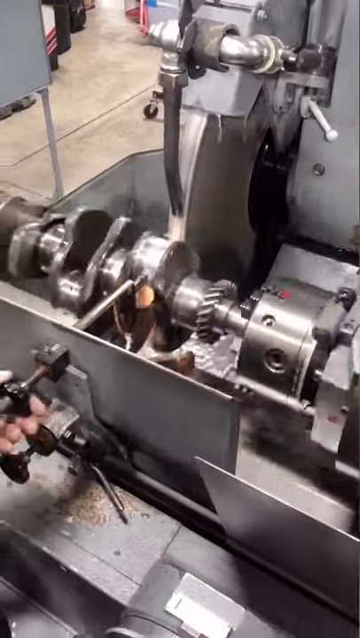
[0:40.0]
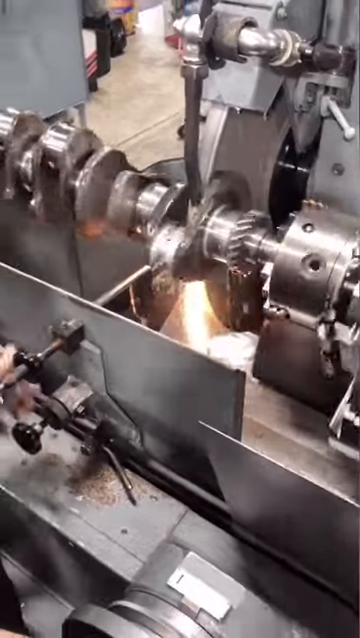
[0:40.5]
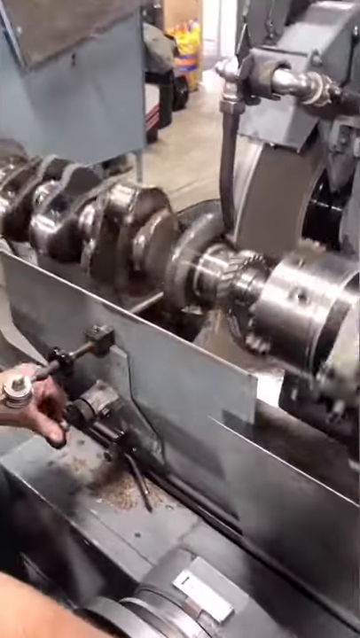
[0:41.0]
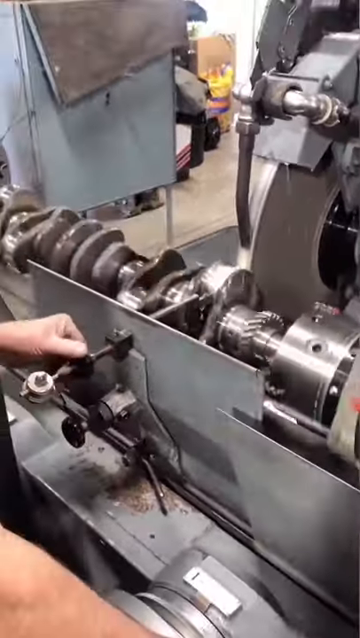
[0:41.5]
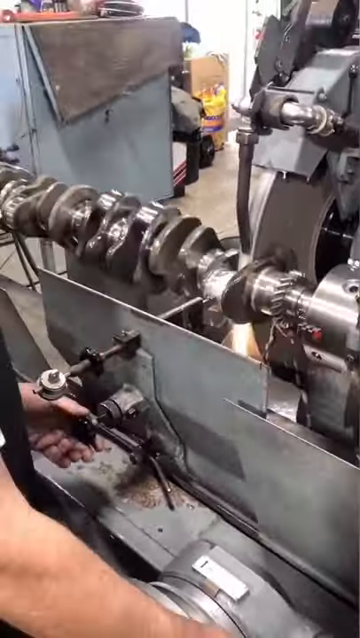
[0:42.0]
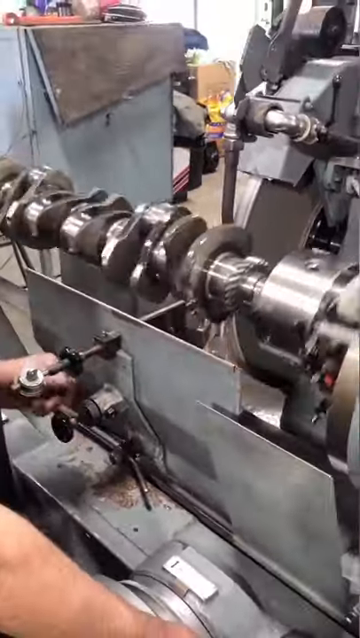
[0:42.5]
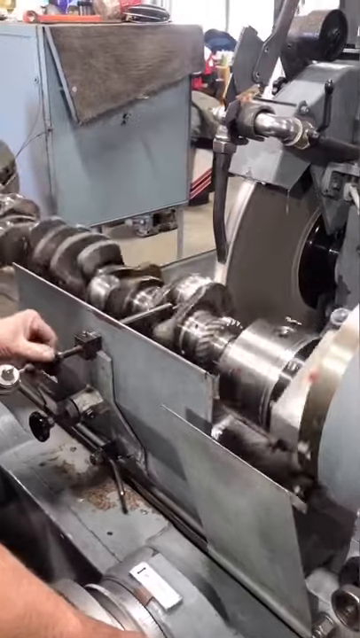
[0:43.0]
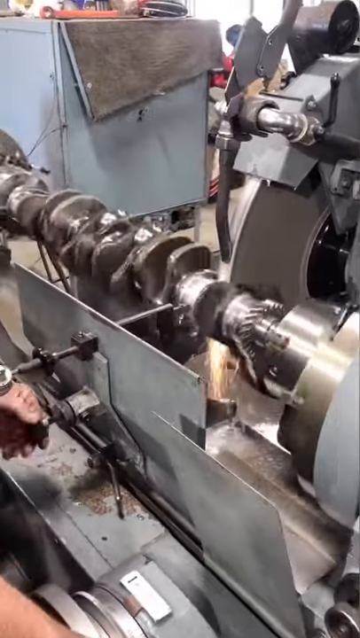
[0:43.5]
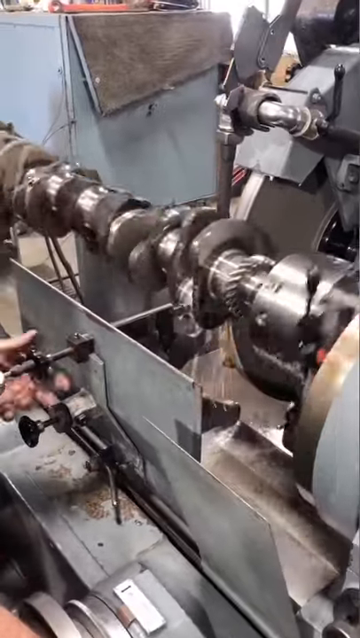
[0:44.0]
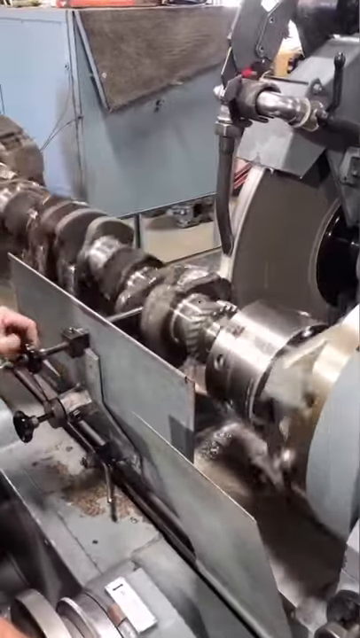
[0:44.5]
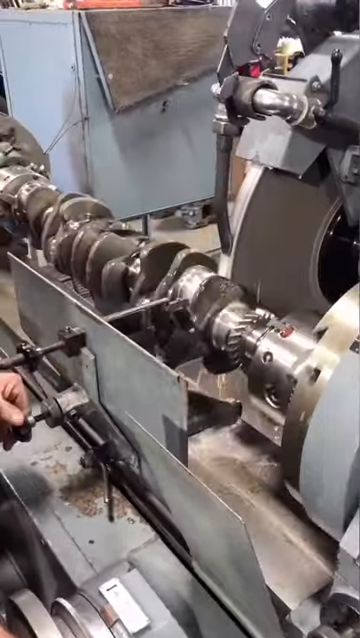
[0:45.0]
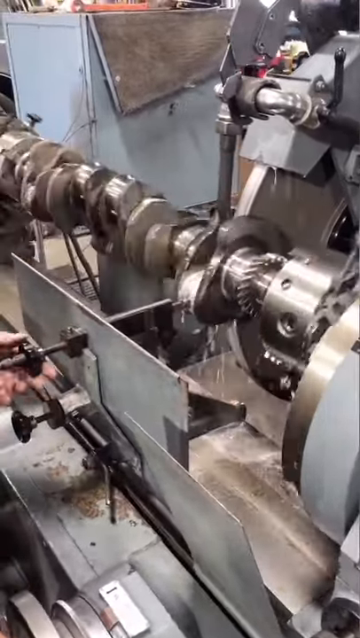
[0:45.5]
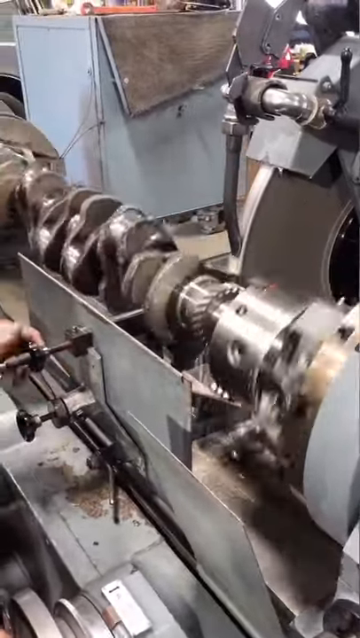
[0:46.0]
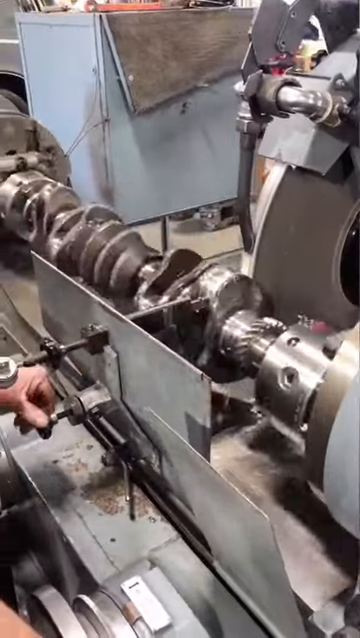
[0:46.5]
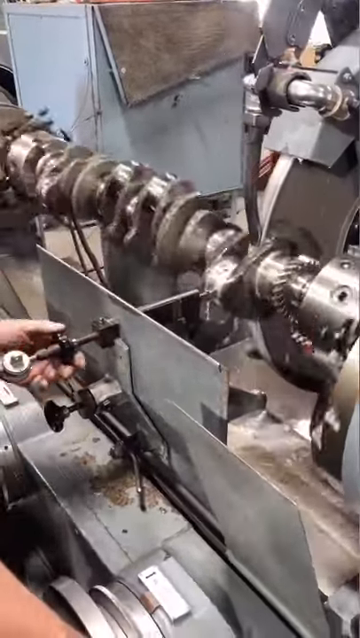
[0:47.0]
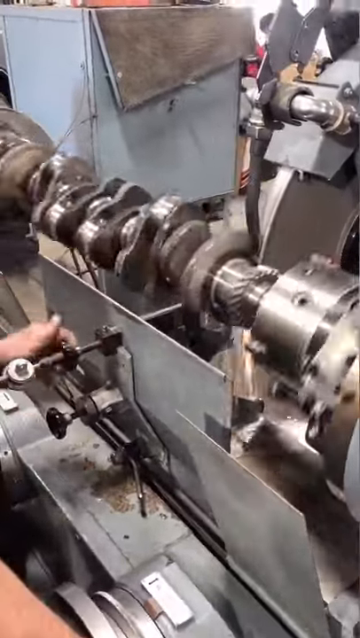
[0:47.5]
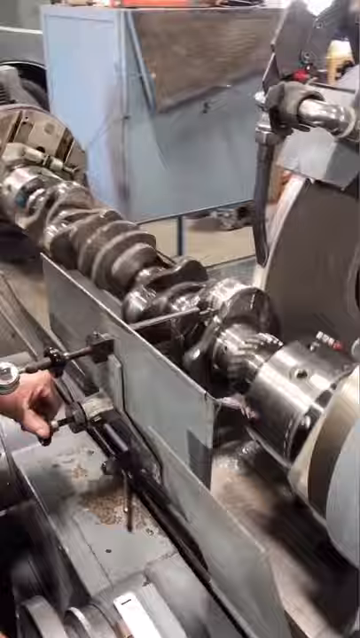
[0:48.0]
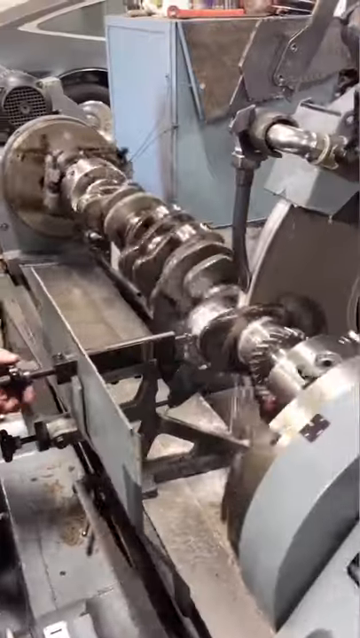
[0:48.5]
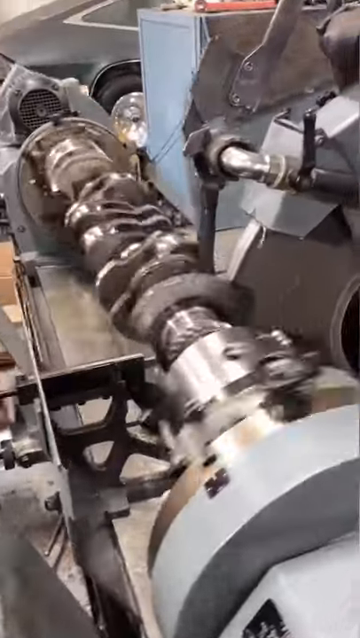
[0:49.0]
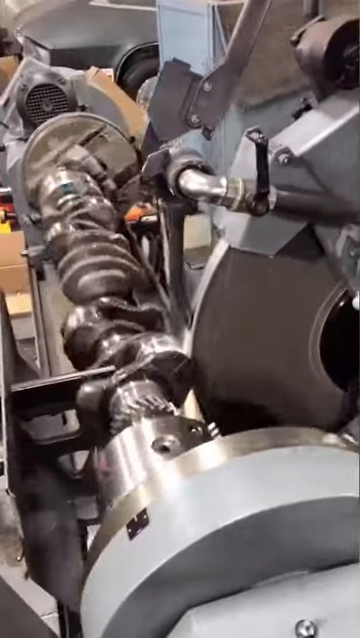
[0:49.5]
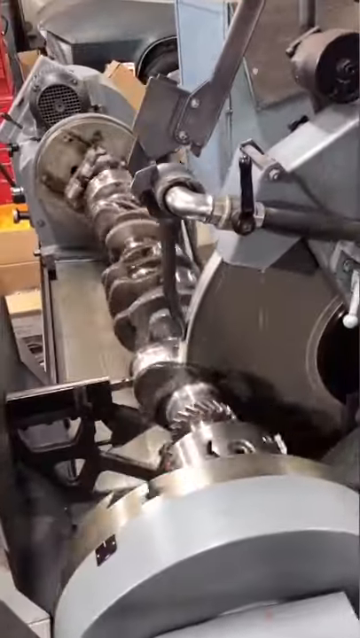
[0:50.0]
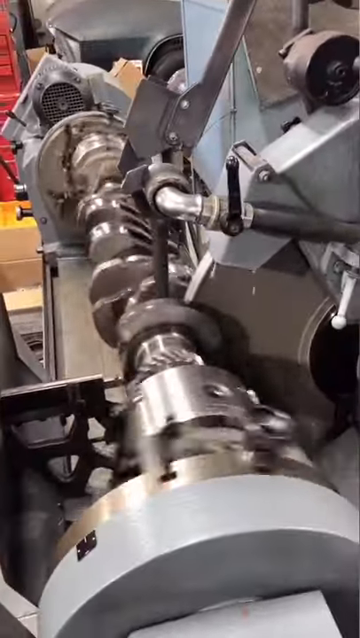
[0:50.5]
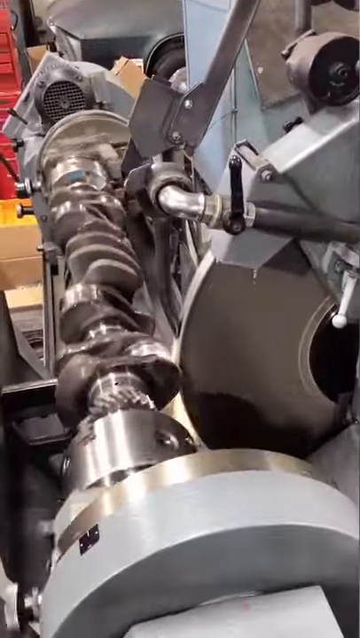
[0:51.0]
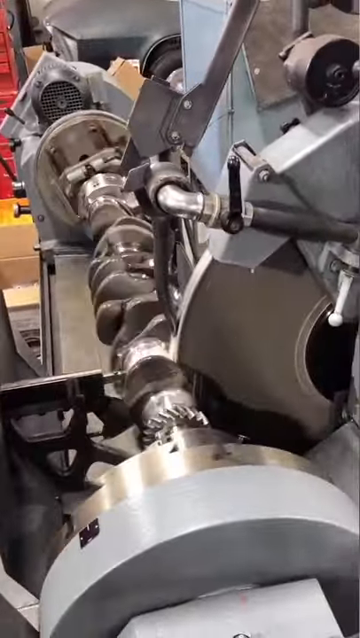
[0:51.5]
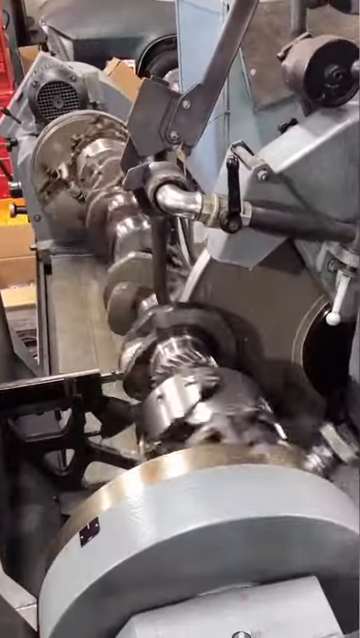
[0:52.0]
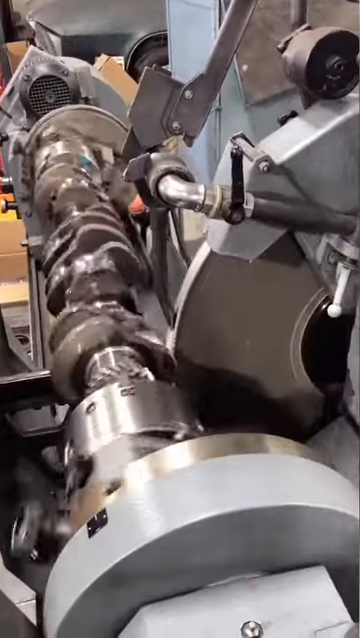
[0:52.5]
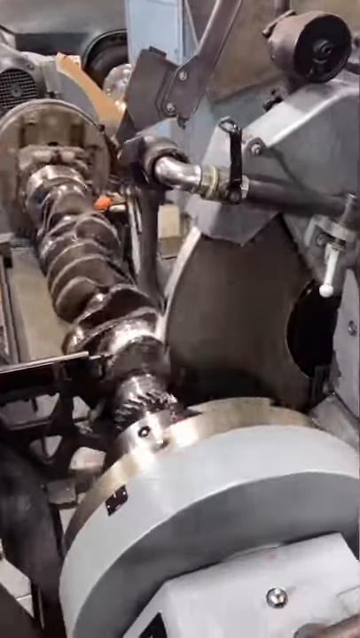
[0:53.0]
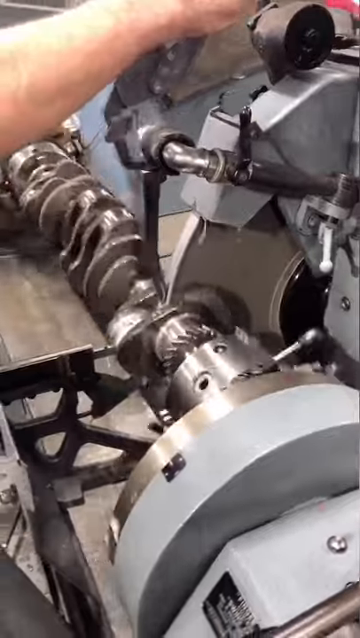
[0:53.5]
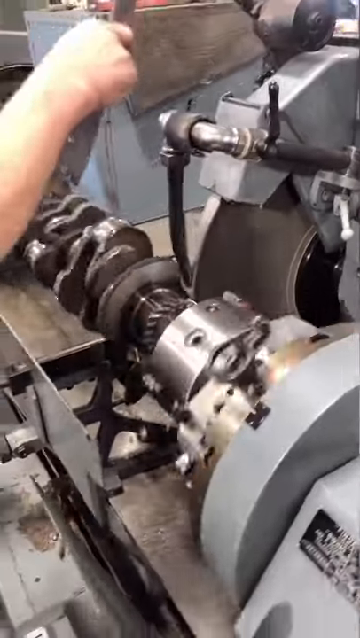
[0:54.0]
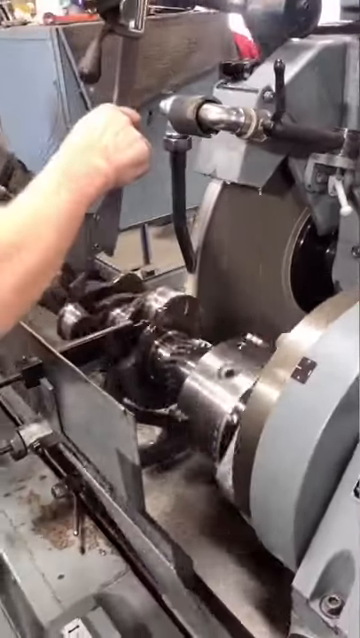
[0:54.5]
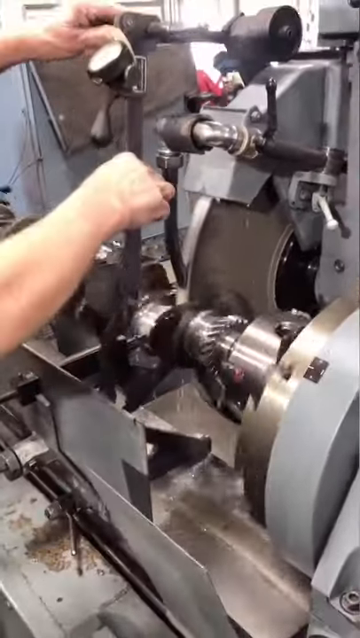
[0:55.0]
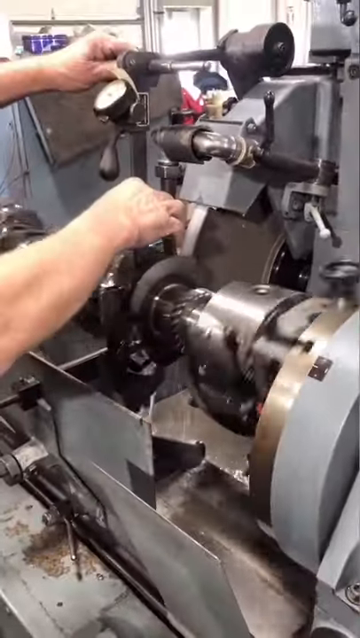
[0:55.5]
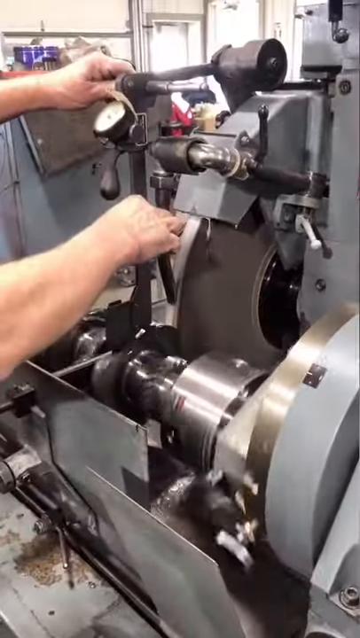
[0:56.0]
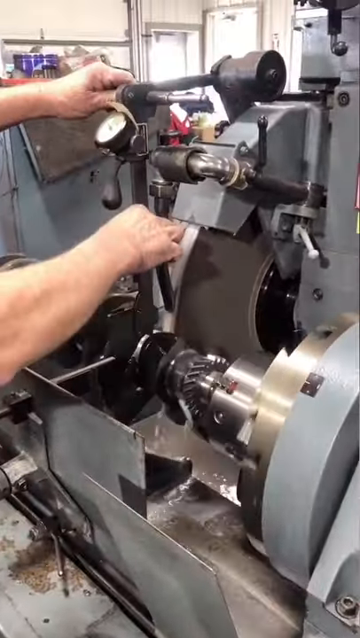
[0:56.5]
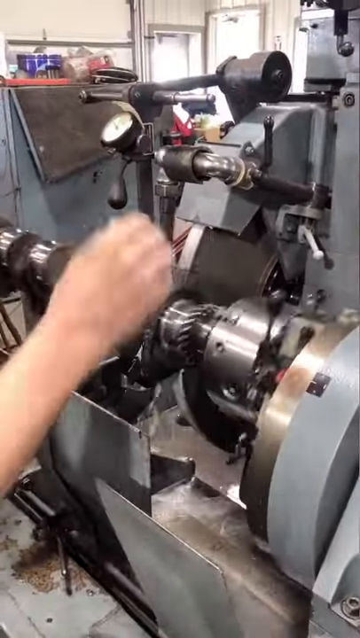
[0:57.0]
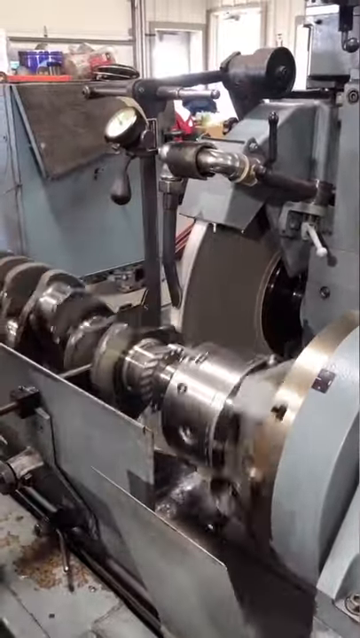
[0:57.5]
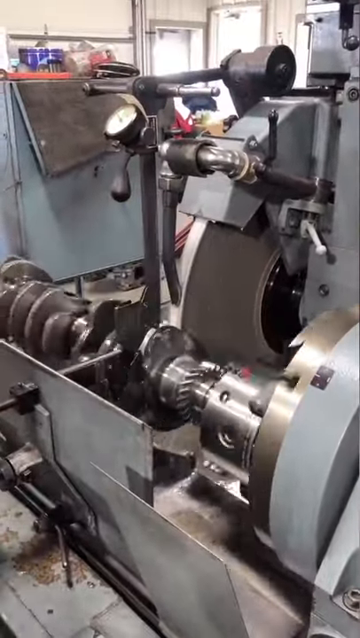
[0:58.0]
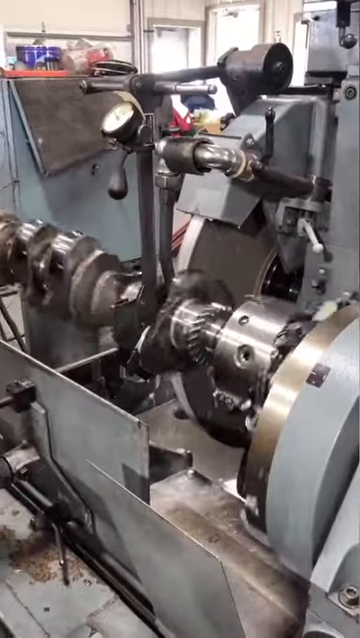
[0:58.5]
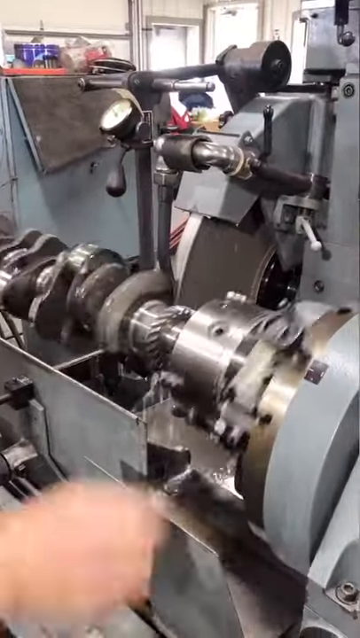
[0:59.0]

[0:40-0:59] A crankshaft runs, going around and around in a circle. It appears to be a big piece of machinery, with a rod that has a bunch of shafts on it. A hand in the front of the machine operates it using the handles. Different angles of the crankshaft are shown. The hand comes out, pulls a piece of the machinery down and hooks it to the other part. As the machine runs, water goes through it. In the background there are other machines, and a concrete floor is visible. There are a lot of gears and gauges on the crankshaft; it whirls around and the bar rotates.